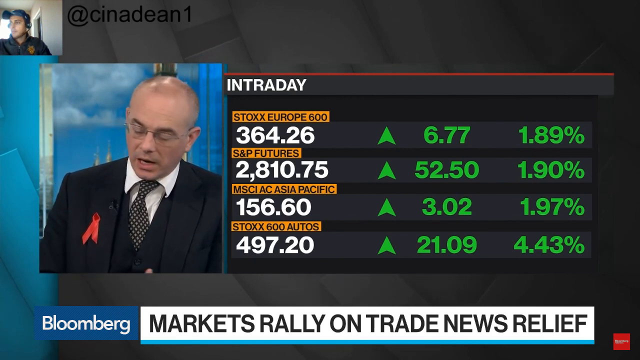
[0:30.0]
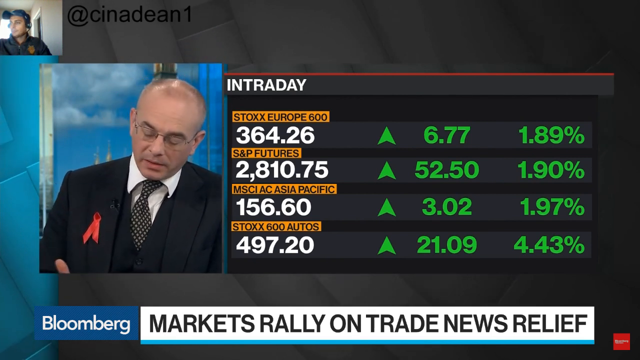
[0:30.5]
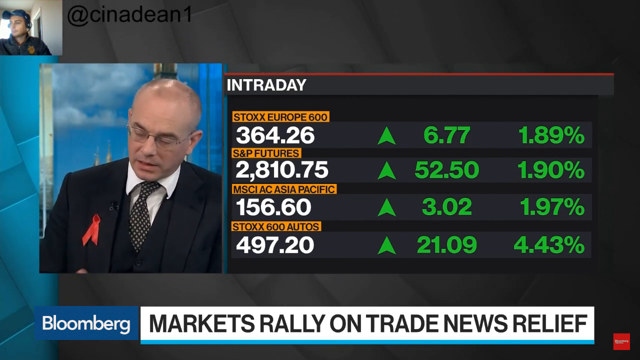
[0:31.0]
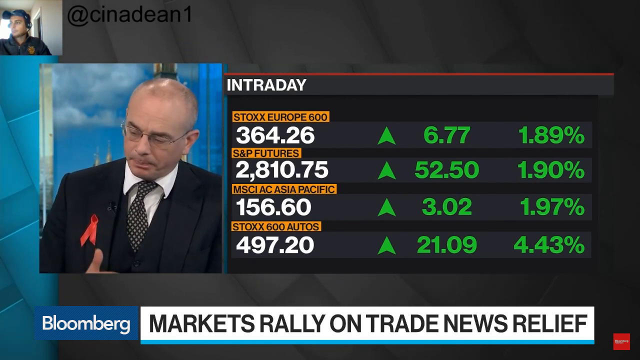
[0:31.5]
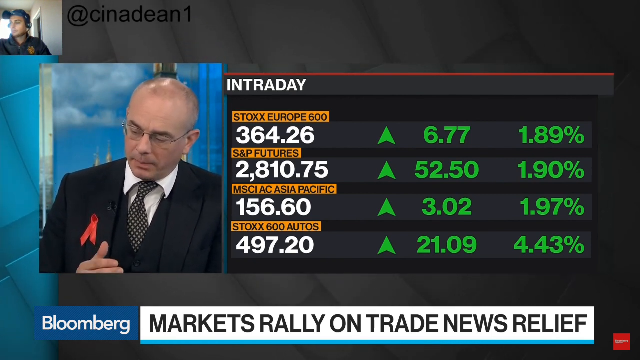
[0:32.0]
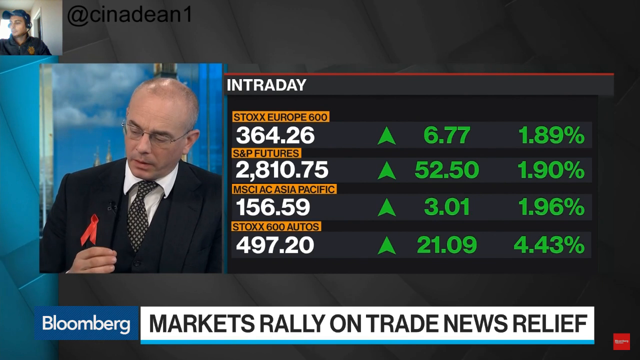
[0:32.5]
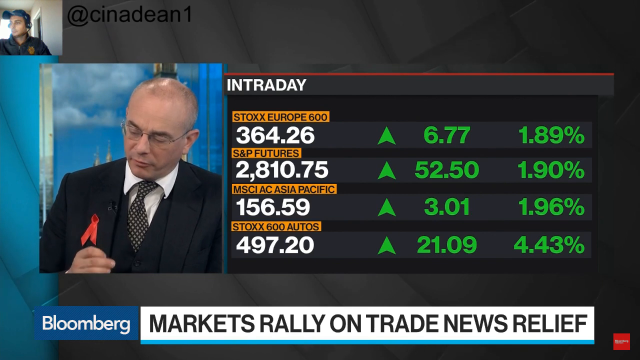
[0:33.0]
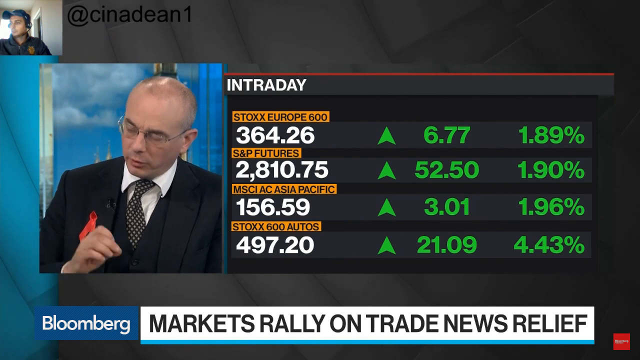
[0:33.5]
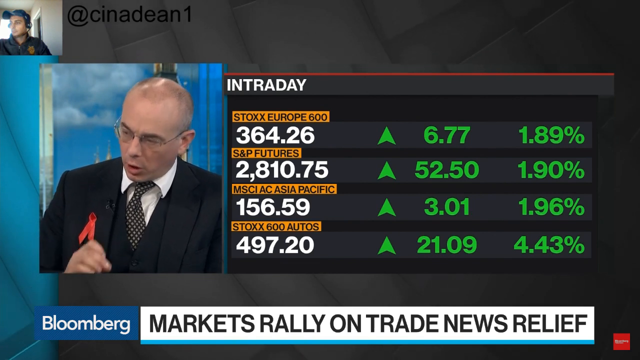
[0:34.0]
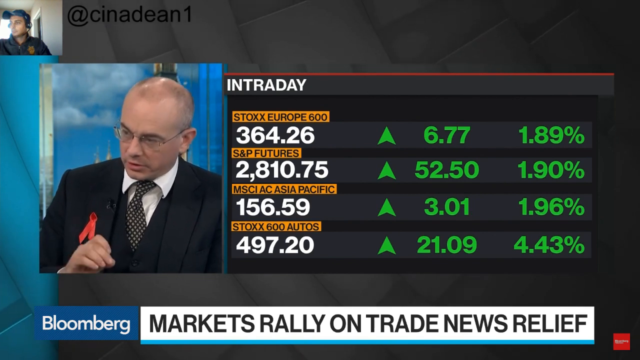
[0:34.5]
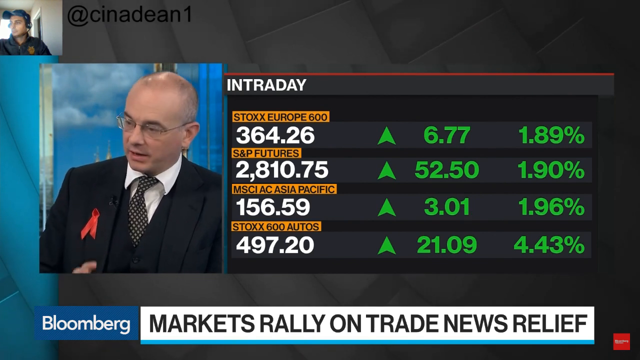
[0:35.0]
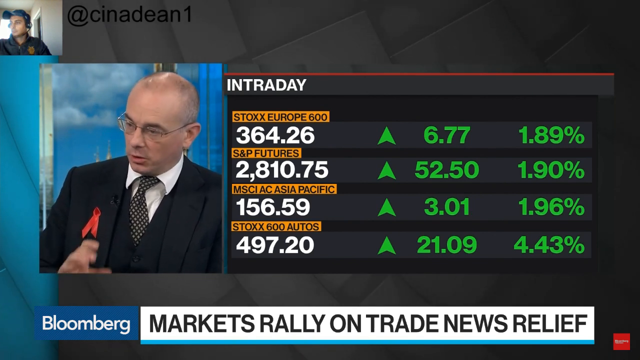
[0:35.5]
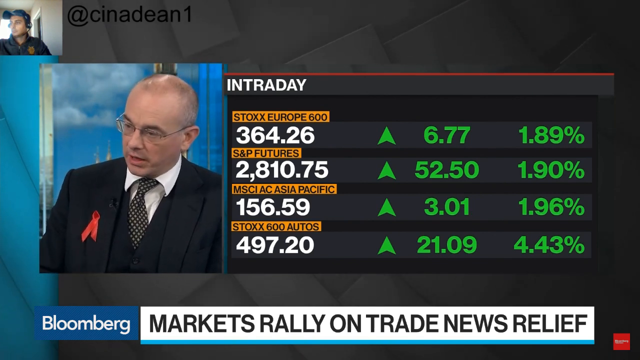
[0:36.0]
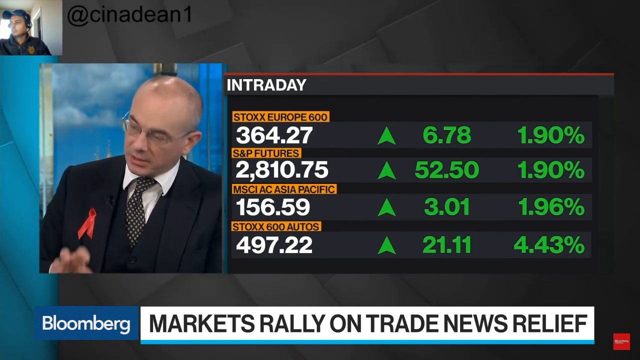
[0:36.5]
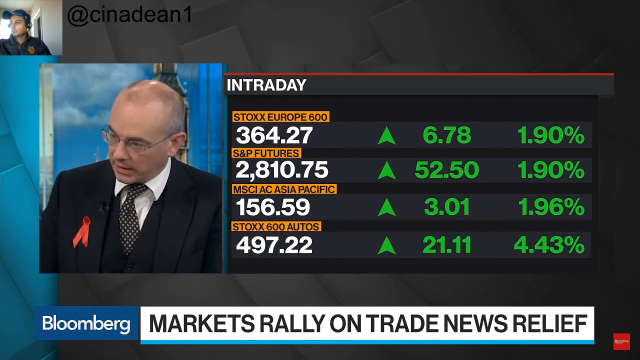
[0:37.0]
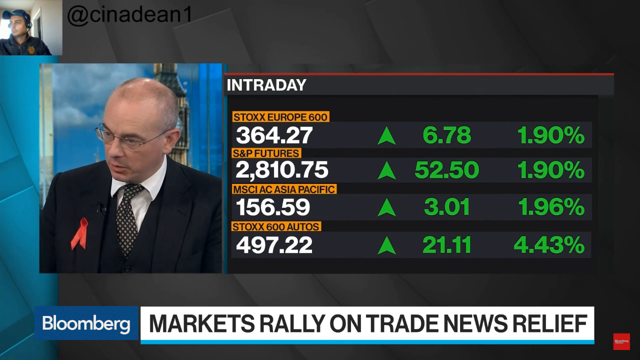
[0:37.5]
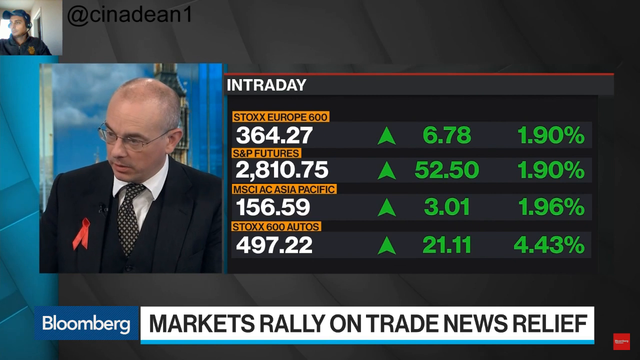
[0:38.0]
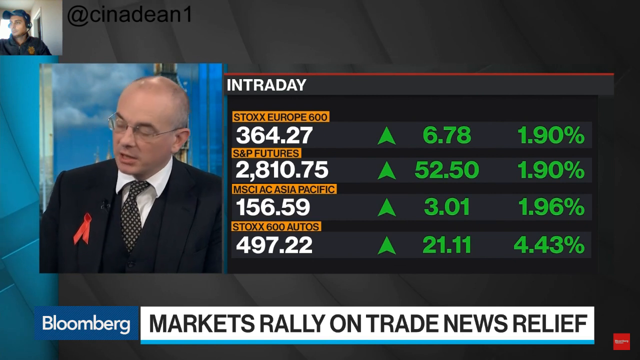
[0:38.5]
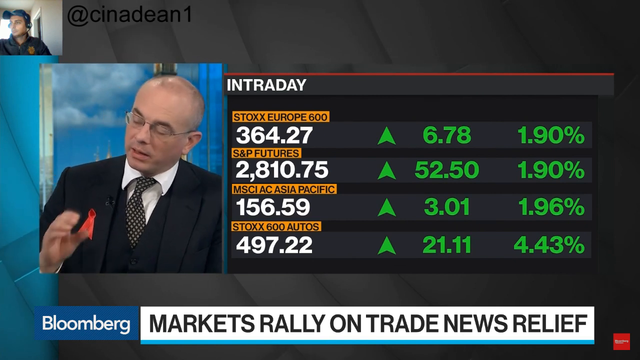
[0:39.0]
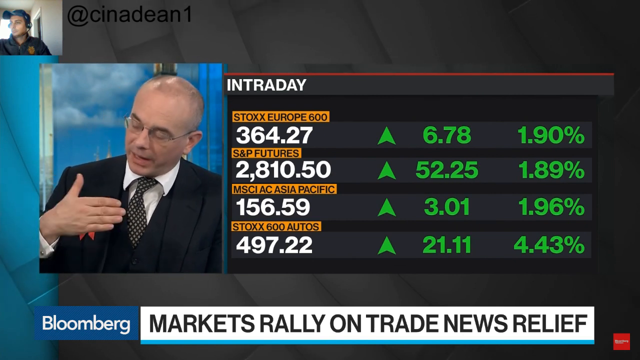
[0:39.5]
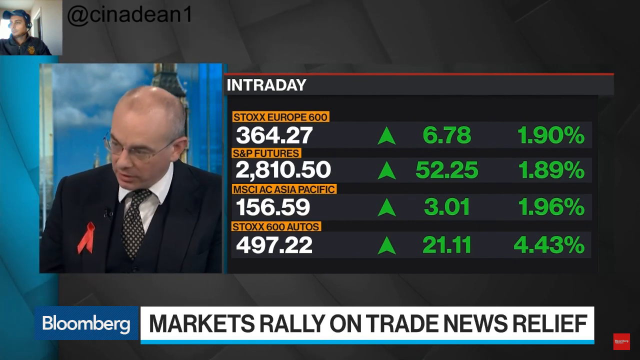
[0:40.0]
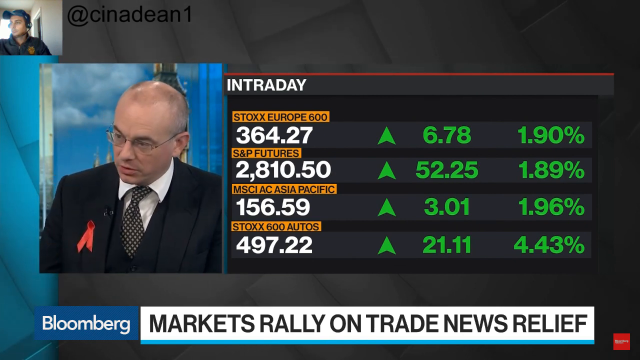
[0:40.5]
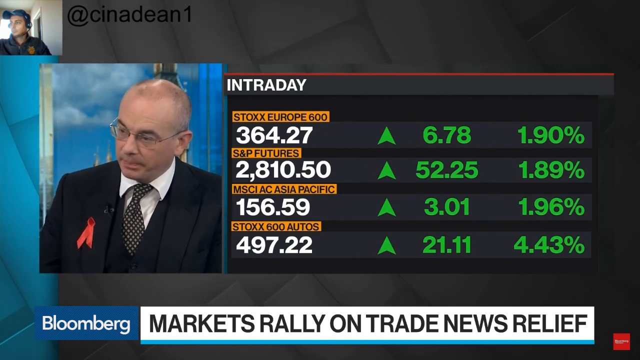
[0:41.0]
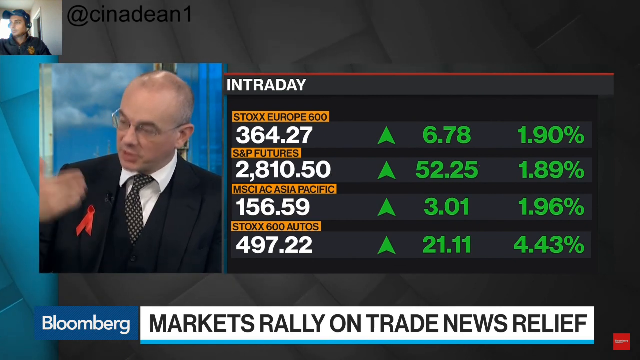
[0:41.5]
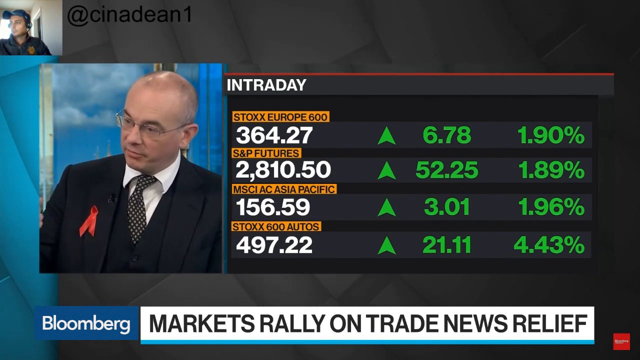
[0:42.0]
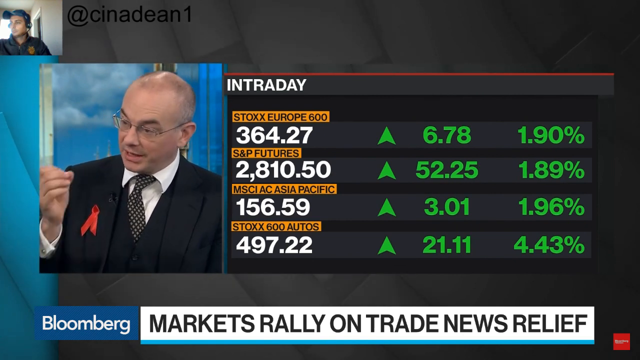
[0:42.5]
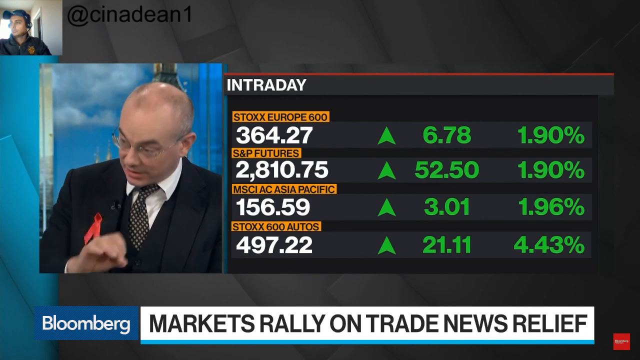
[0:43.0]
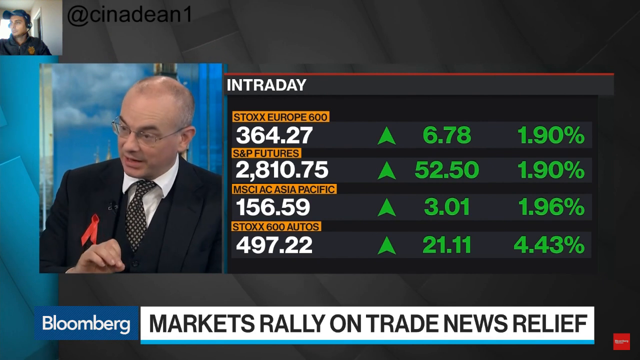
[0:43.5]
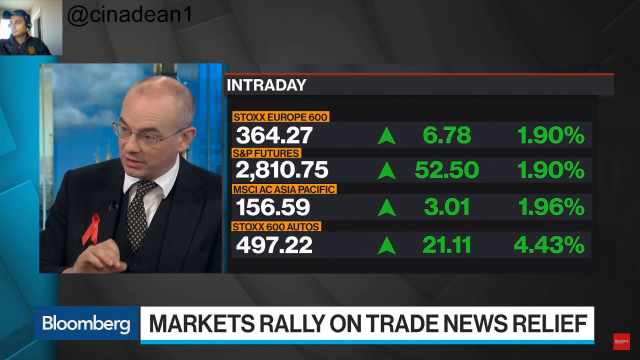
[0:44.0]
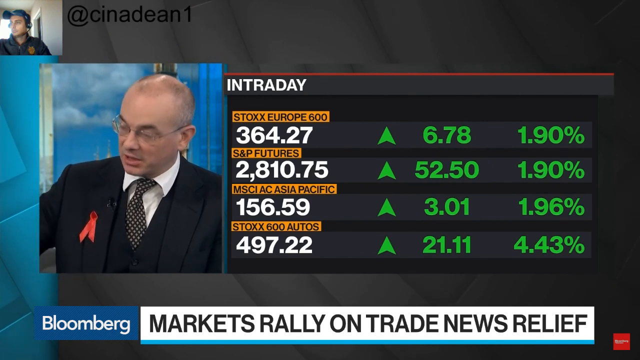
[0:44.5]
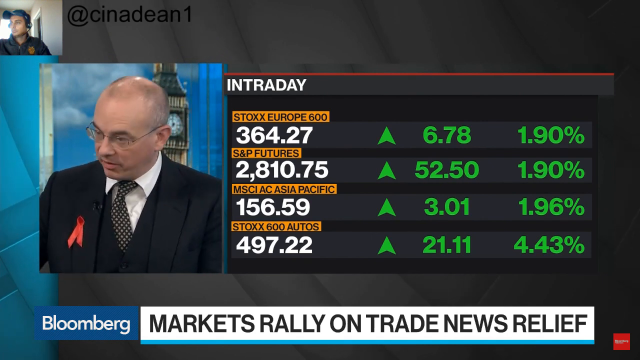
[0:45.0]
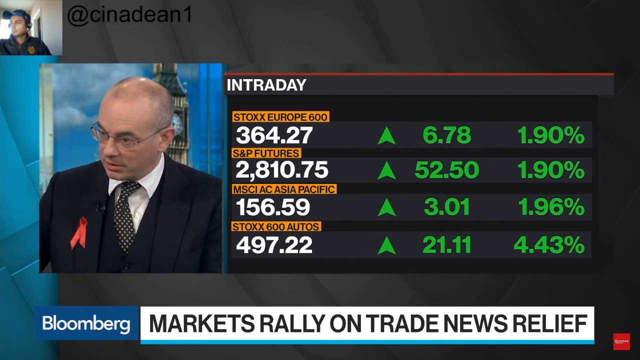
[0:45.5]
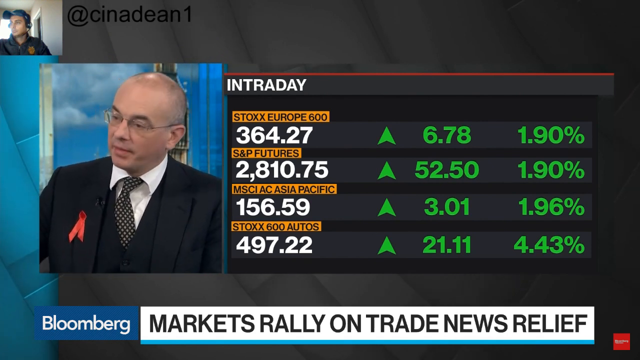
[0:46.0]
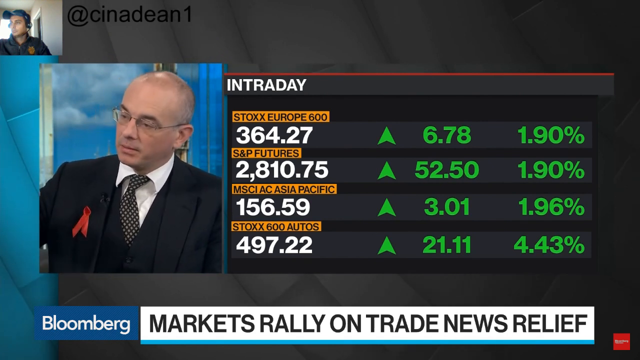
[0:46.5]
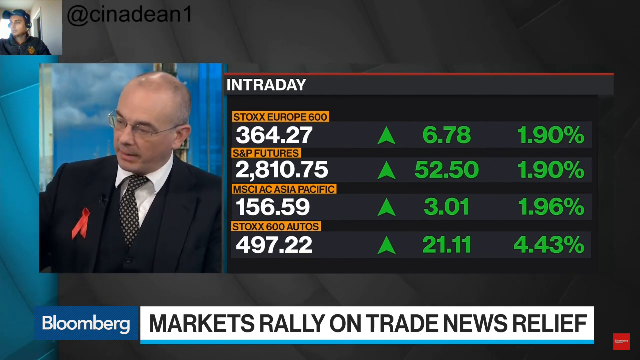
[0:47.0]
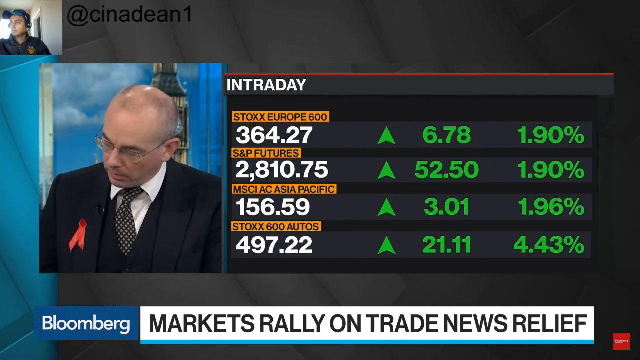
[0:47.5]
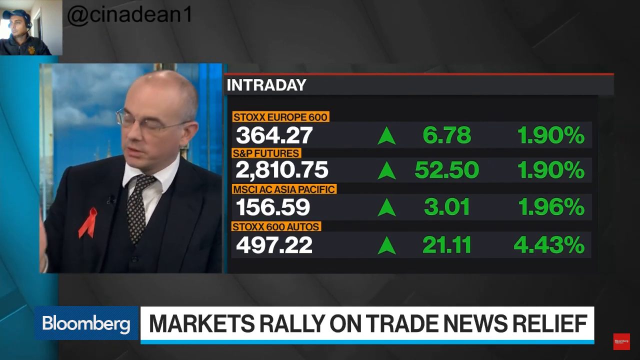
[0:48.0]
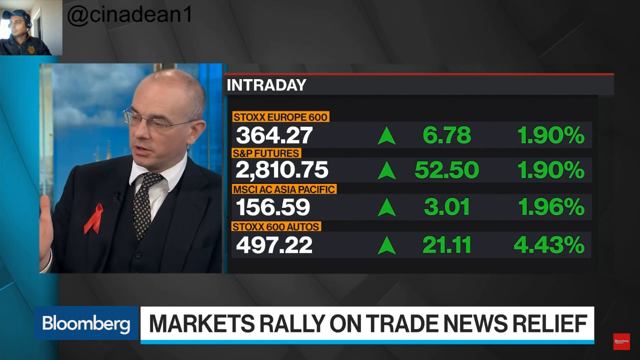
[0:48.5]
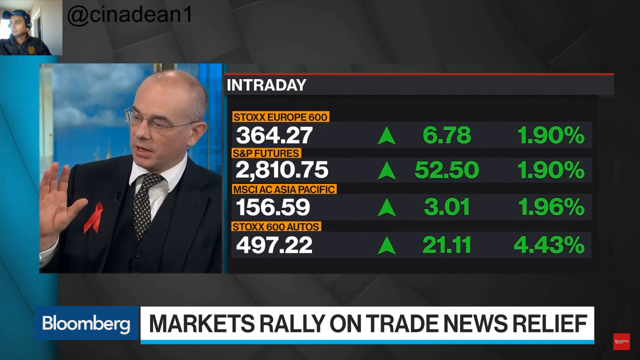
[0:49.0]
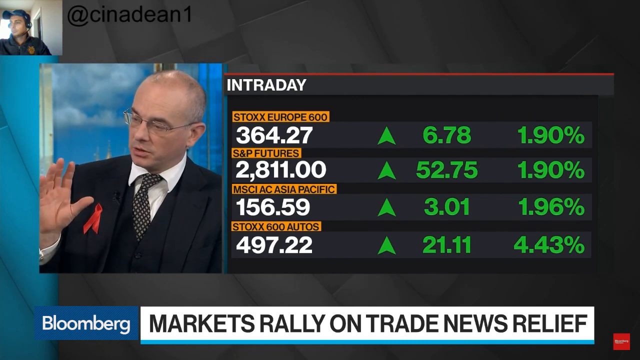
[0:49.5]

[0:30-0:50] Paul Donovan is still talking, with a box across the bottom in bold black letters about markets rallying on trade news relief and the Bloomberg logo on its left. The man in the upper left corner remains in his video feed with the handle "CINADN1". An intraday graphic lists Stocks Europe 600 up 6.77 points, 1.0189%, at 364.26; S&P futures at 2,810.75, up 52.5 points, 1.9%; and entries including the MSCI Asia Pacific index and a stocks 600 entry up 21.09 points, 4.43%. Donovan is shown in a picture on the left alongside the graphic, using his right hand as he talks. A very small logo in a red box is in the bottom right corner of the screen.